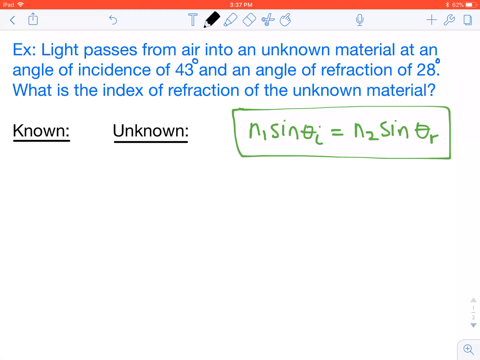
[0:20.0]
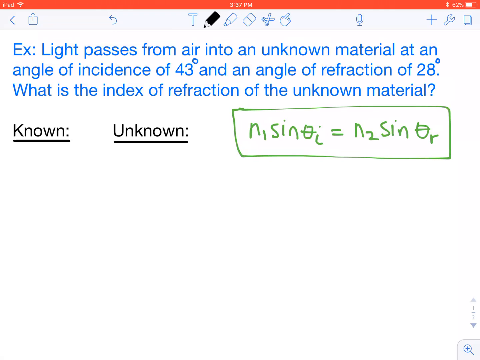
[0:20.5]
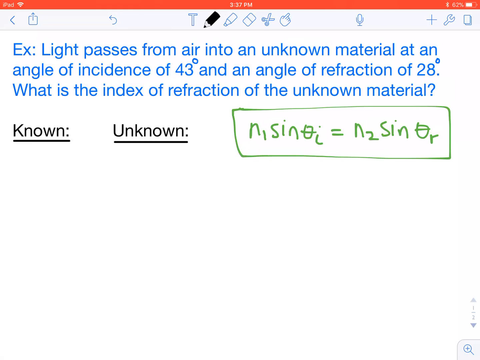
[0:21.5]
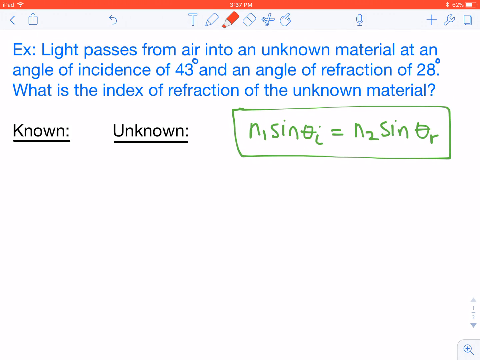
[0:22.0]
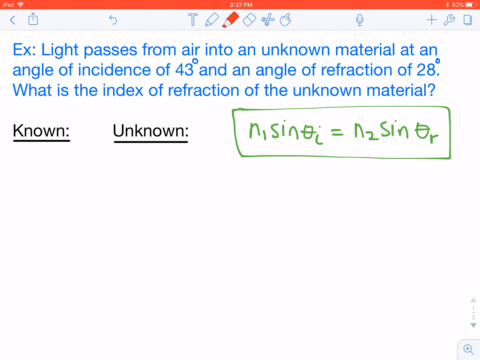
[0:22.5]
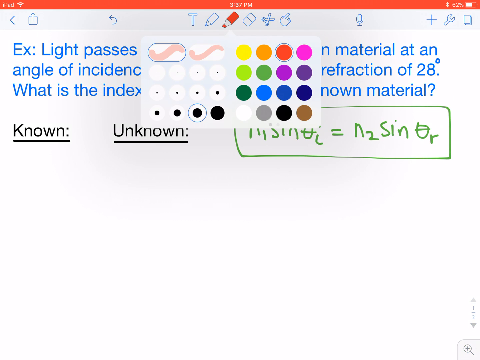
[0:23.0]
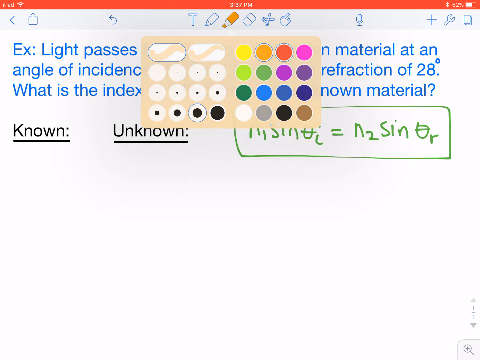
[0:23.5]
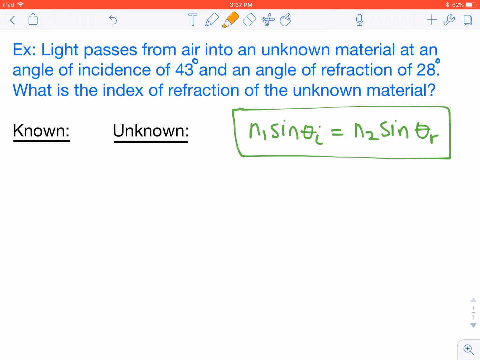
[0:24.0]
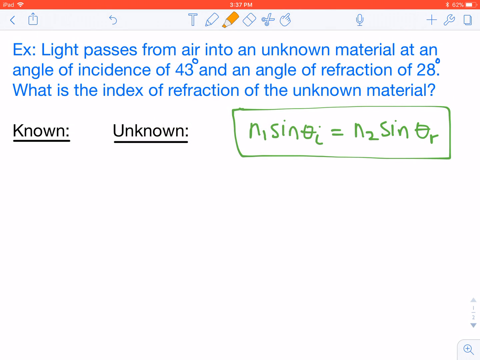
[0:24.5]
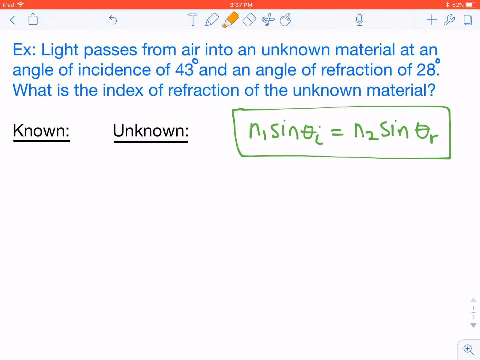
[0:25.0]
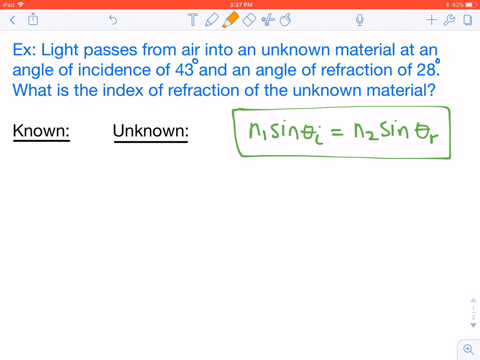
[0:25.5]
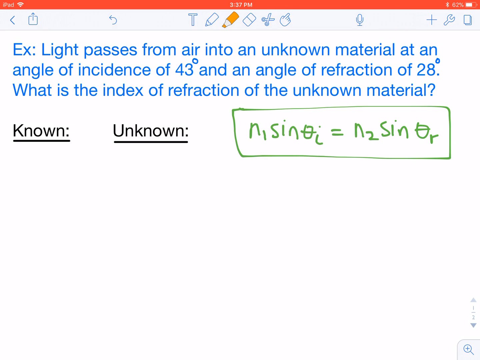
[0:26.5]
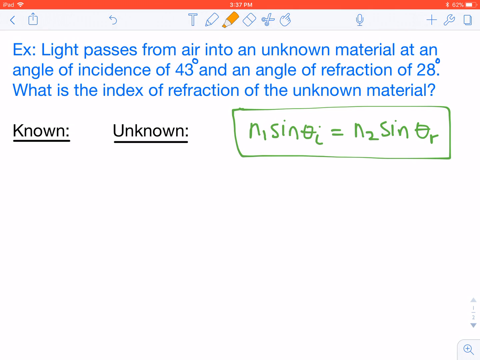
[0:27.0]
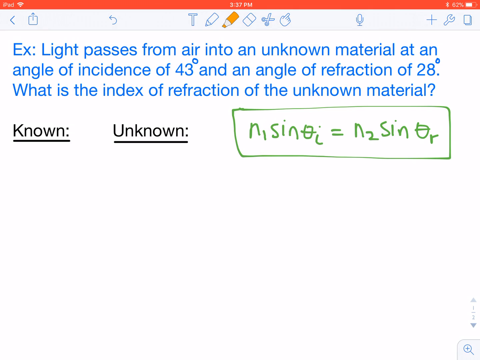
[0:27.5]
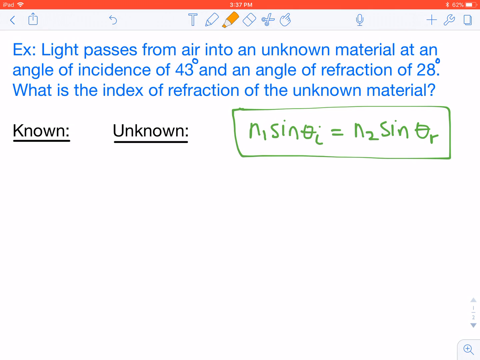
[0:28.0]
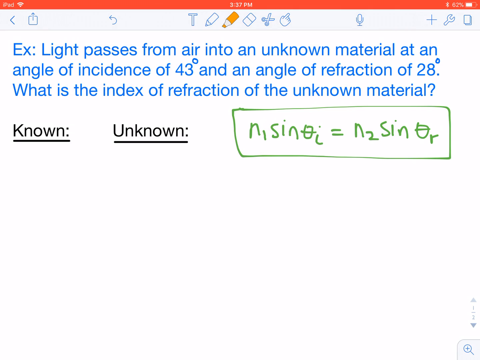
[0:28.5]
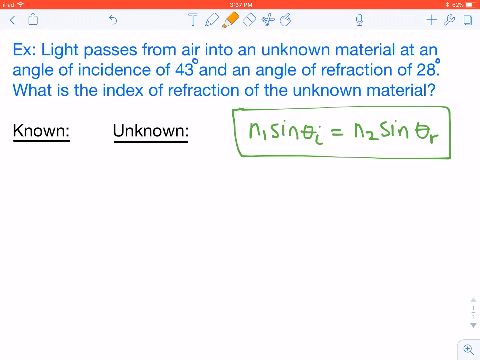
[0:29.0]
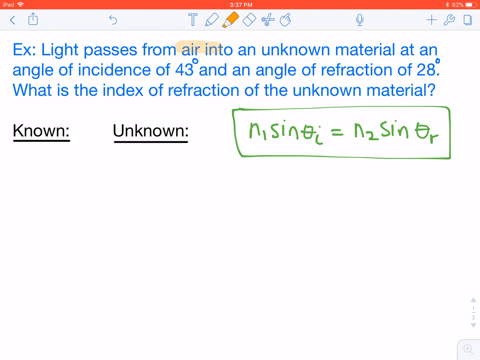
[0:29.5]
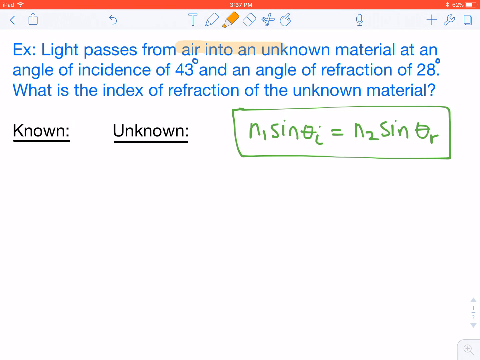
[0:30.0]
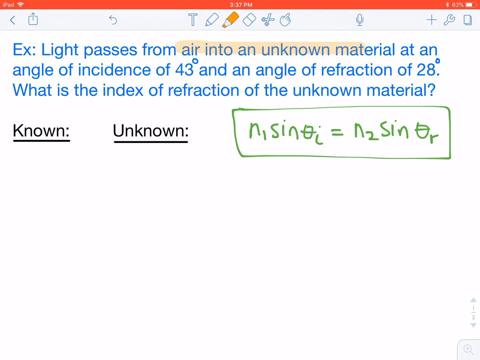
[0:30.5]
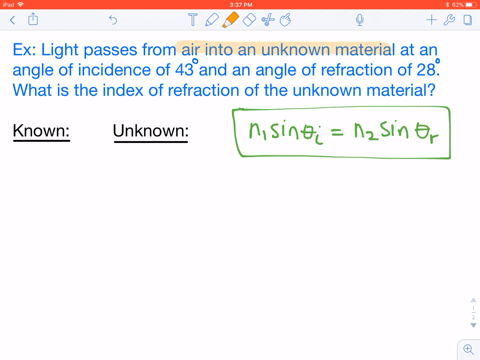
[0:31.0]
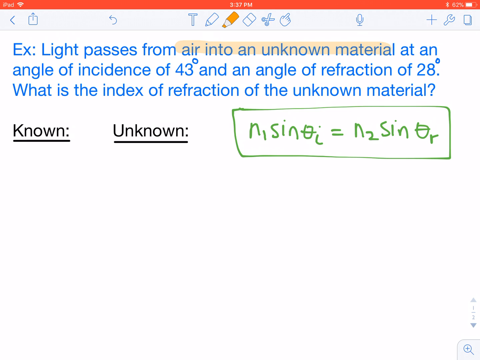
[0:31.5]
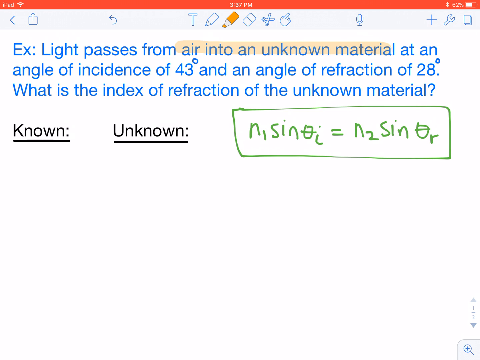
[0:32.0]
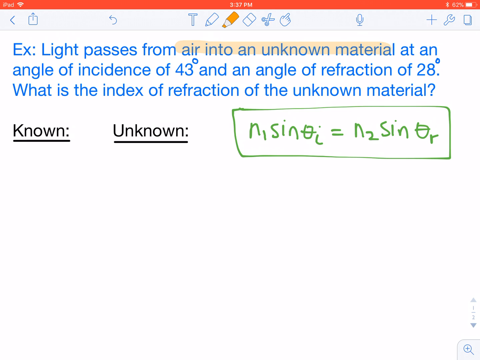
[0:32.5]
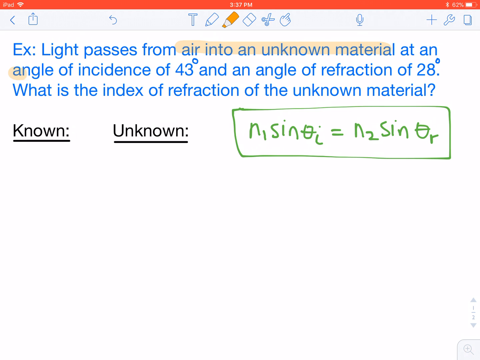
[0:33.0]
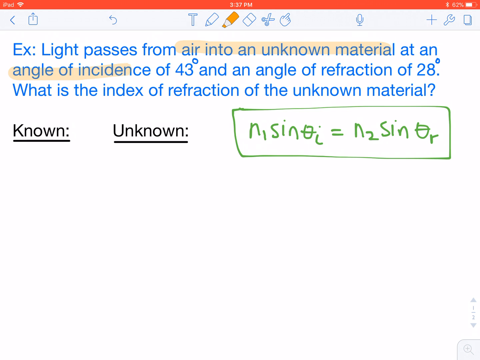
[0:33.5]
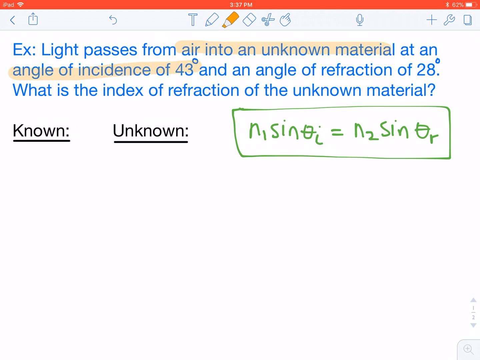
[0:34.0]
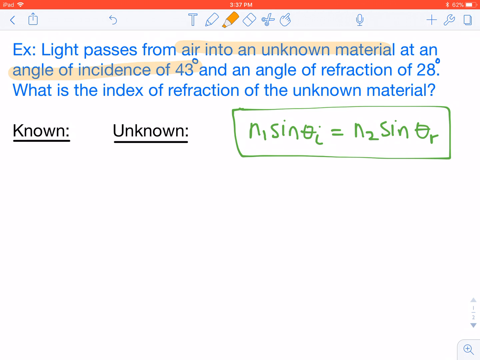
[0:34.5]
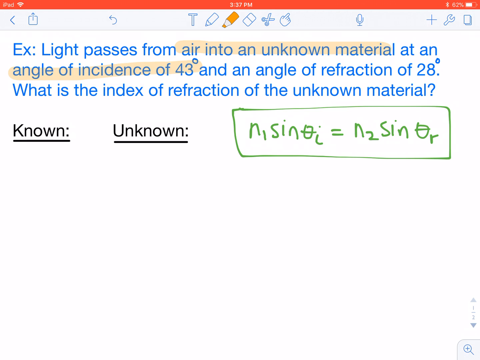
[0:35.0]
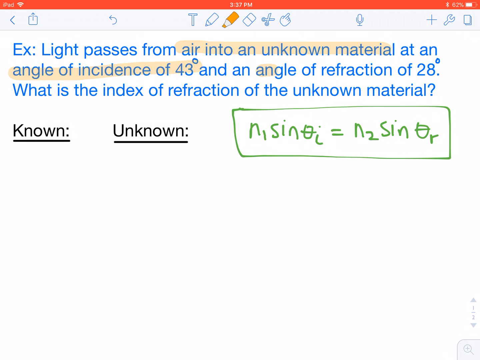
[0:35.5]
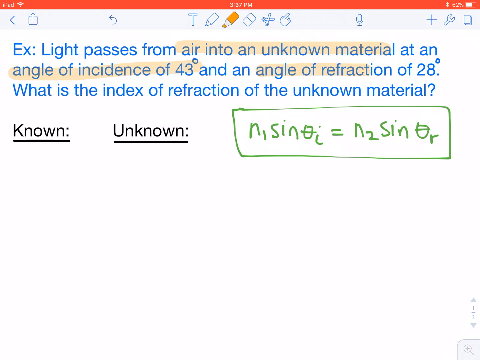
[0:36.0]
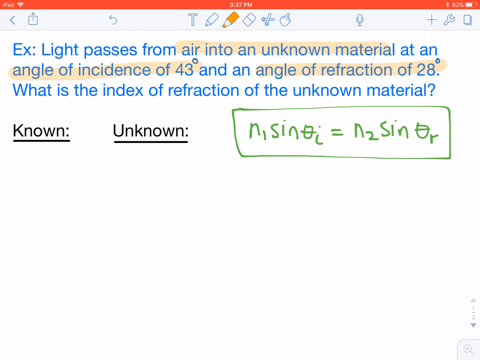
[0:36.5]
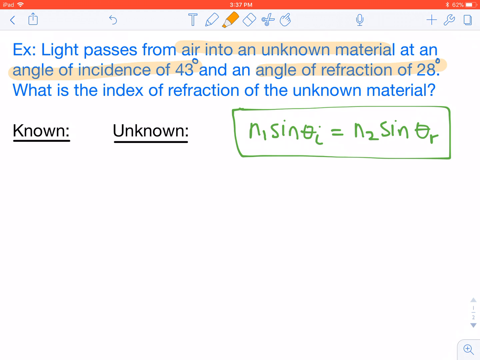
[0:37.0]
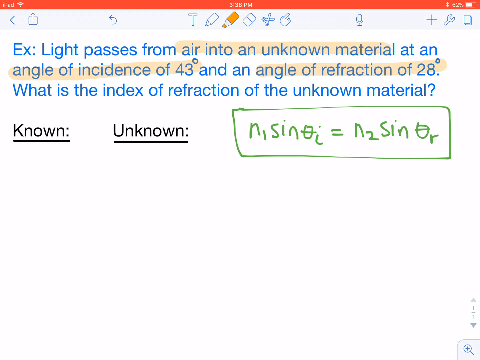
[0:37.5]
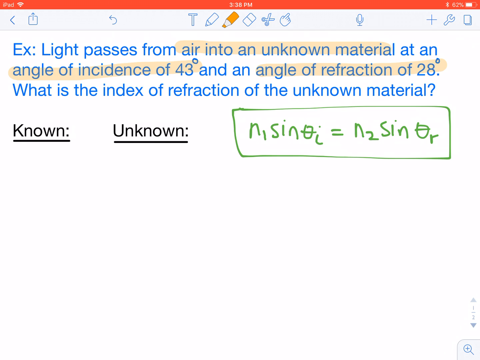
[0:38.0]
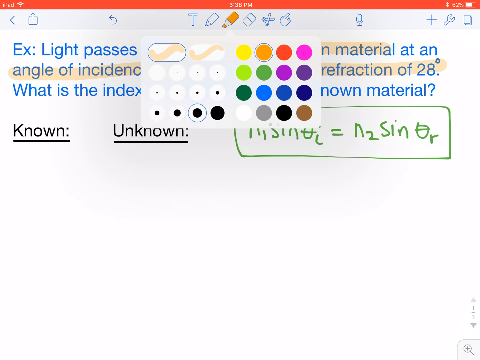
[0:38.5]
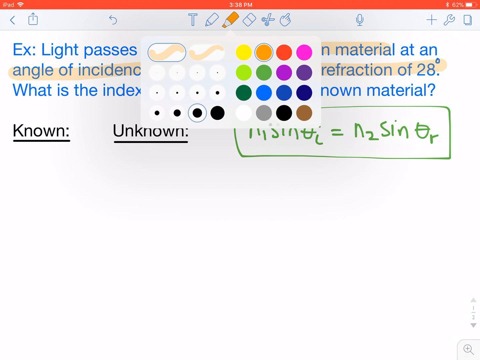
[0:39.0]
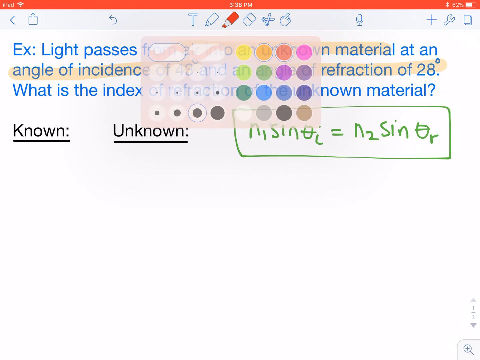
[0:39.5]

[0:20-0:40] The same page is shown, now with motion as the person changes colours. Having previously used the black pen, they switch to orange and highlight parts of the question, apparently "air into an unknown material", "angle of incidence of 43 degrees" and "angle of refraction of 28 degrees". Near the end they look about to switch to a different colour, possibly red. Besides black, there appear to be around 16 colour options to choose from.